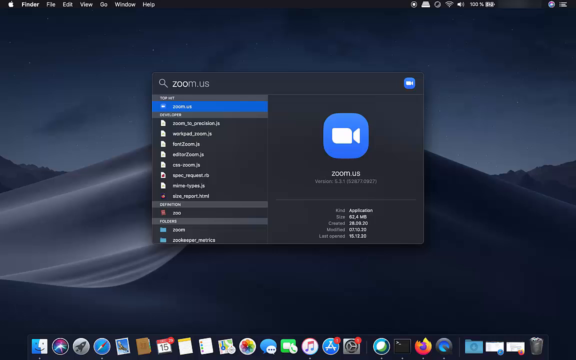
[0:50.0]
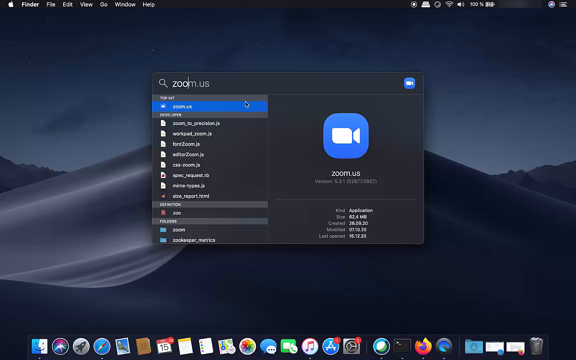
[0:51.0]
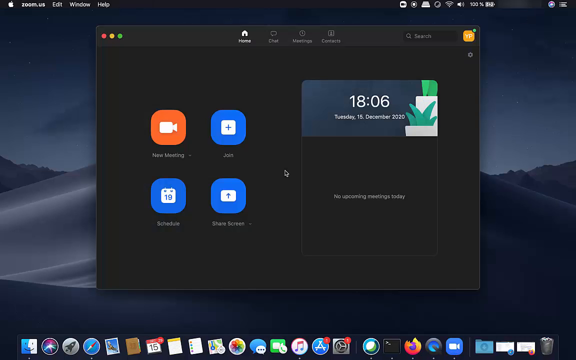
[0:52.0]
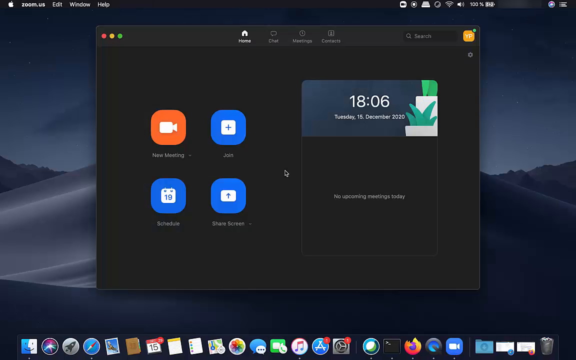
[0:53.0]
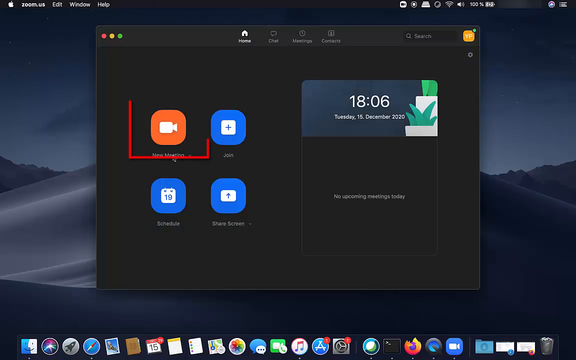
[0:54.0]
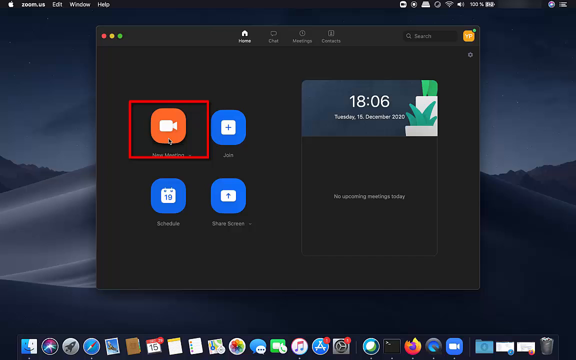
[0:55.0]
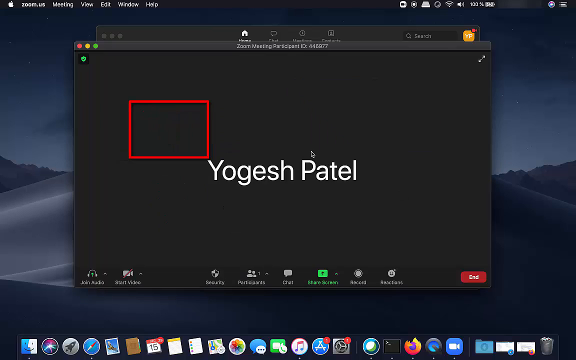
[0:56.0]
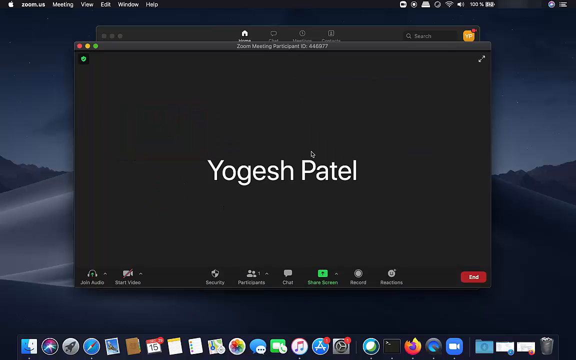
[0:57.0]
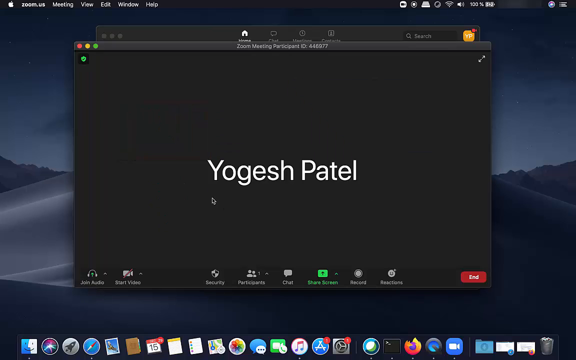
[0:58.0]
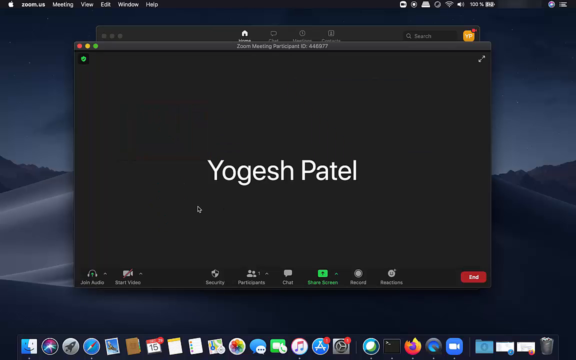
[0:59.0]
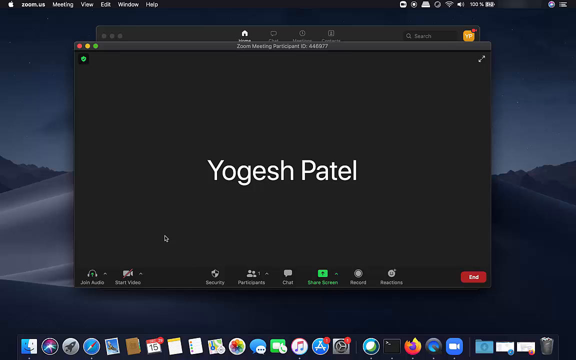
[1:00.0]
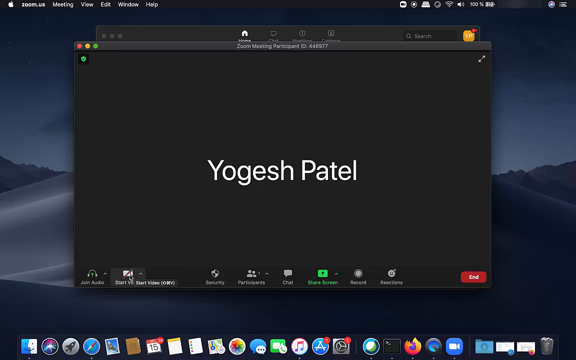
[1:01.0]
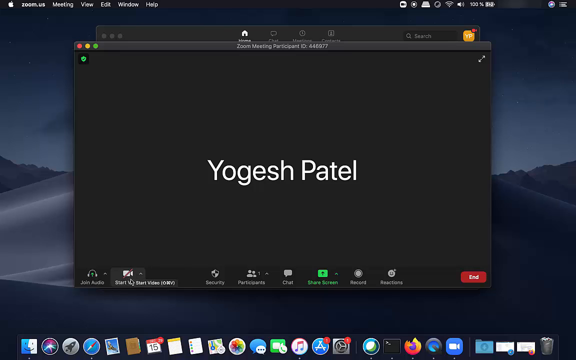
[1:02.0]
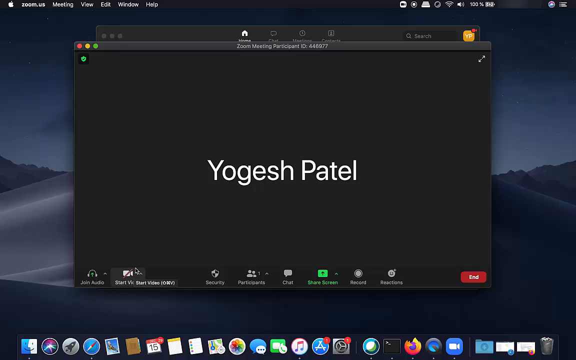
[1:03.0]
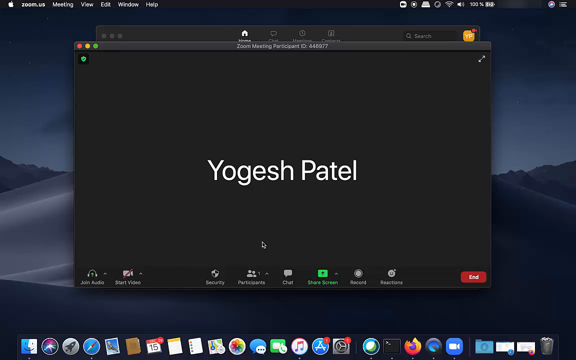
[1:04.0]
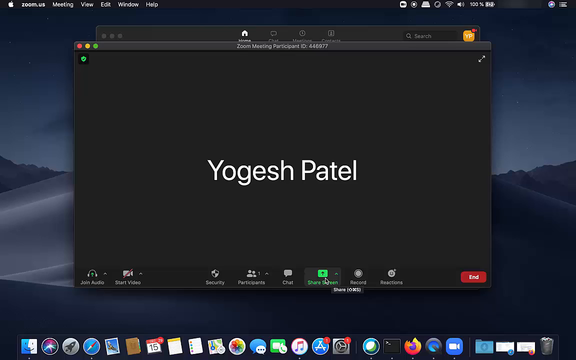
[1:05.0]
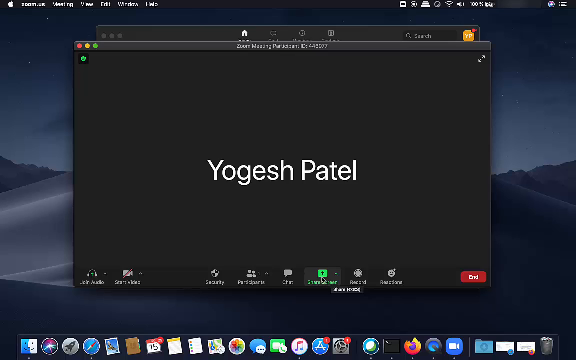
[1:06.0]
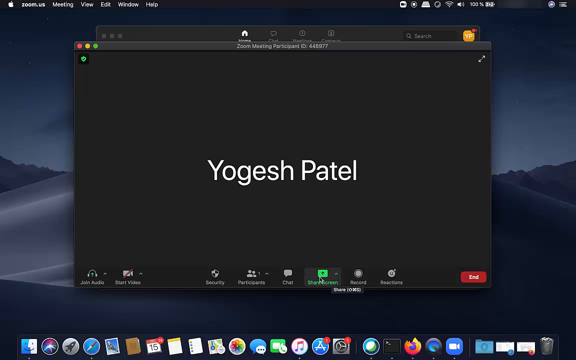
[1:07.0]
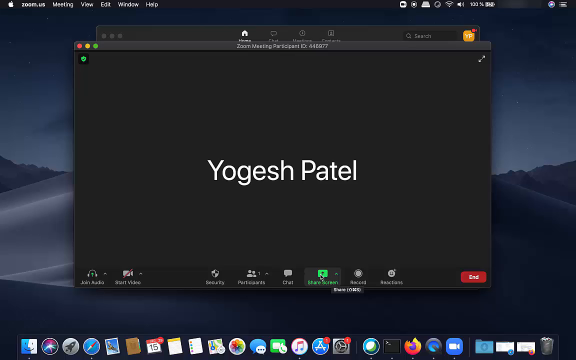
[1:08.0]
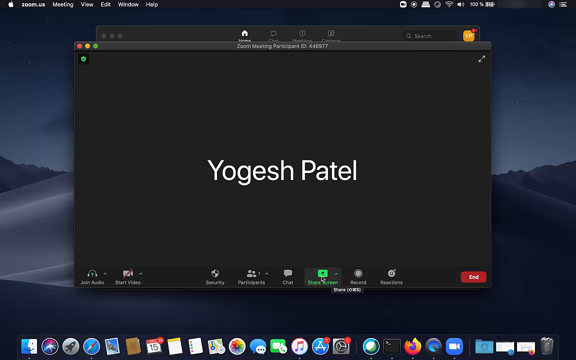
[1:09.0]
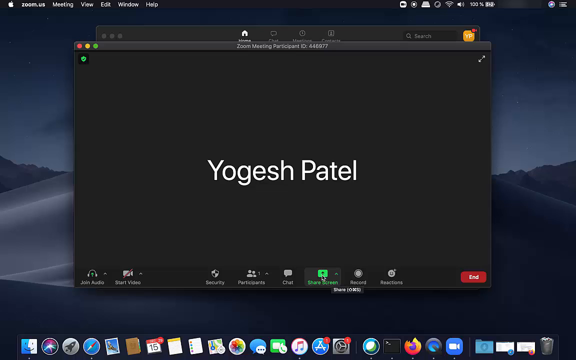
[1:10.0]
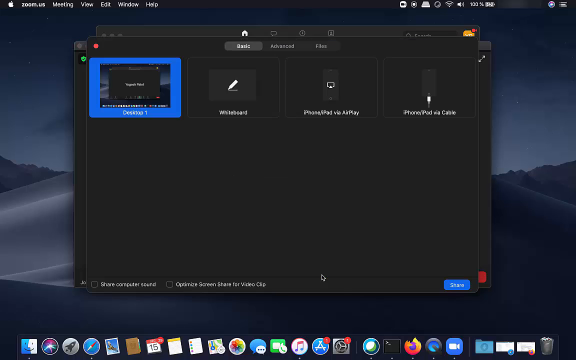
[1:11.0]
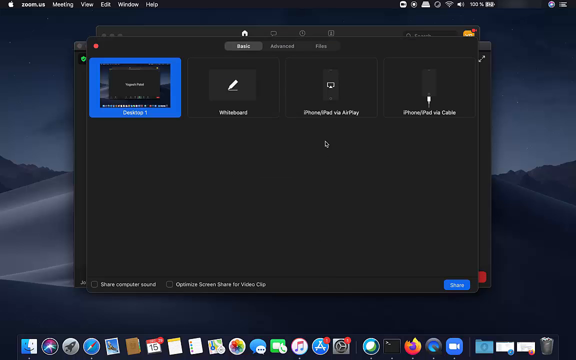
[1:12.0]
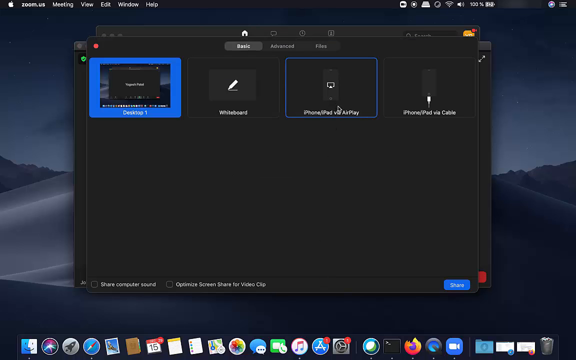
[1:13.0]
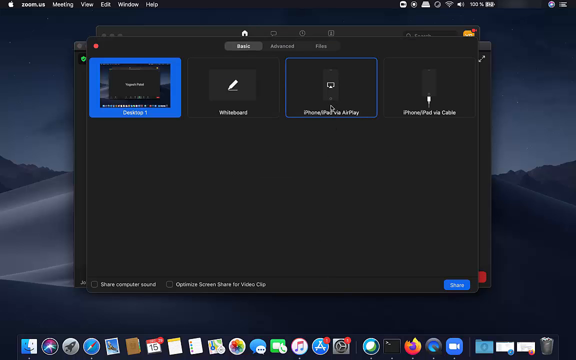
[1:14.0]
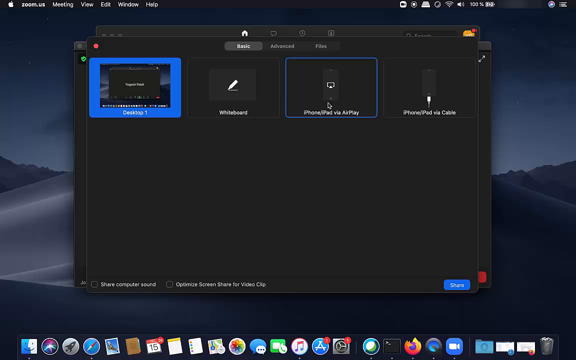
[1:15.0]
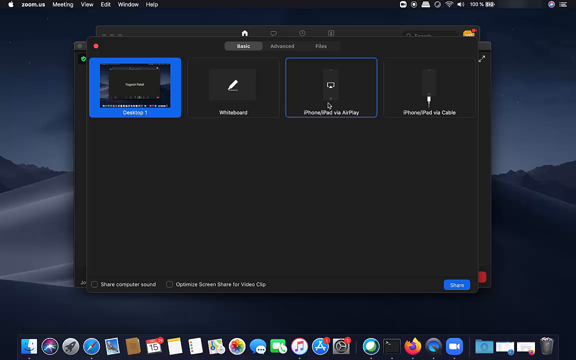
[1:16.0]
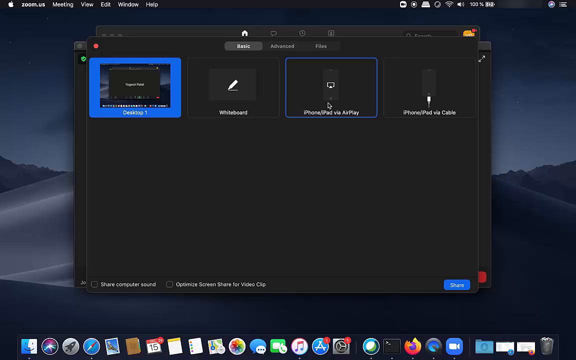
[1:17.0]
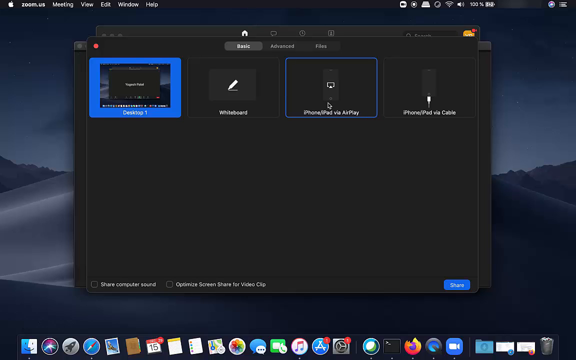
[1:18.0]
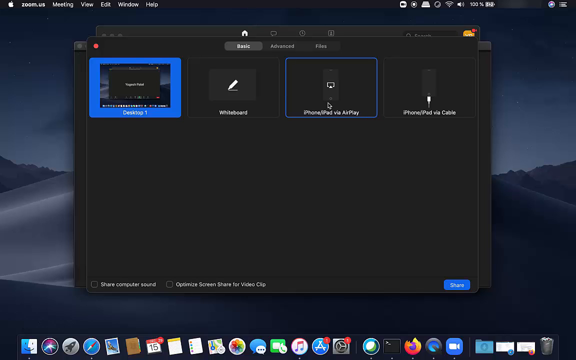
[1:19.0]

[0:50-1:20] A screensaver is shown with a pop-up box in the middle of the screen. A line is drawn around the video portion or icon. The name "Yogesh Patel" appears in the middle of the screen. Someone using the computer moves the cursor and highlights a green box, hovering over it. A pop-up box shows a blue box with a picture in the middle, as well as a black box outlined in blue. A Zoom pop-up appears with the first selection highlighted in blue. On the right side it says "Zoom US", and there is the Zoom symbol, a blue box with a white camera-like shape in the middle. This pop-up box remains in the middle of the computer screen.